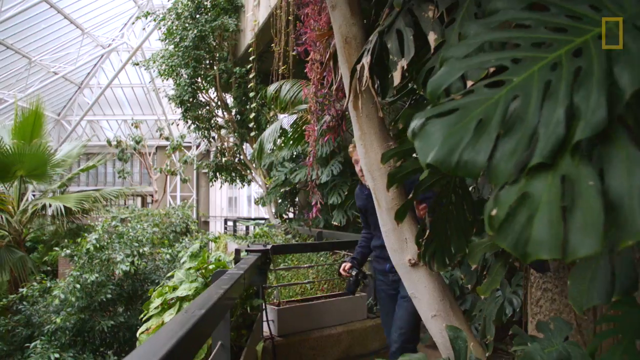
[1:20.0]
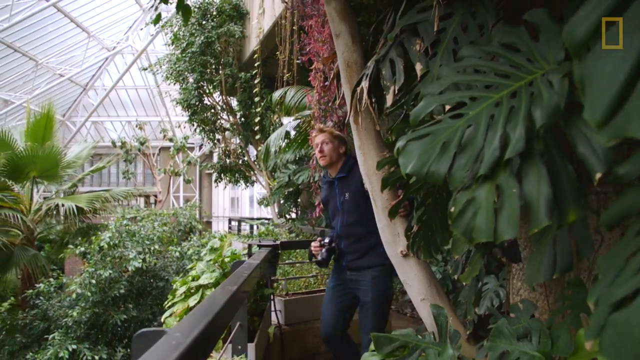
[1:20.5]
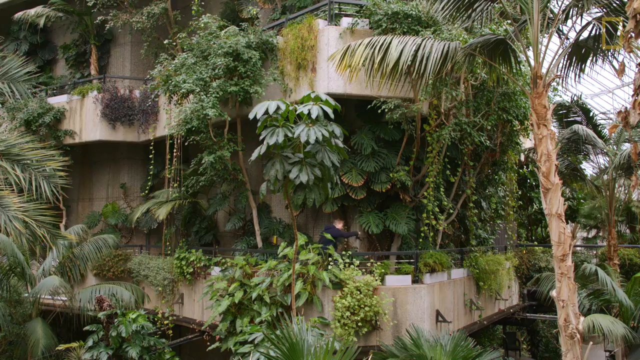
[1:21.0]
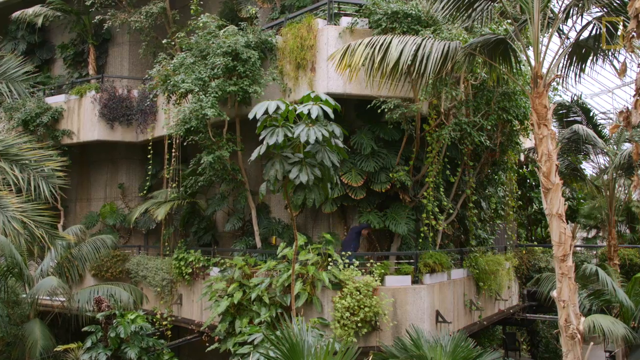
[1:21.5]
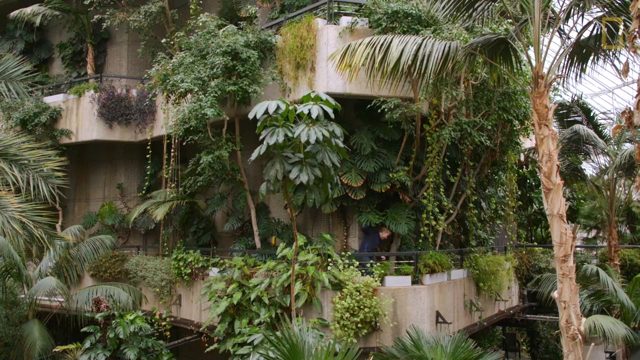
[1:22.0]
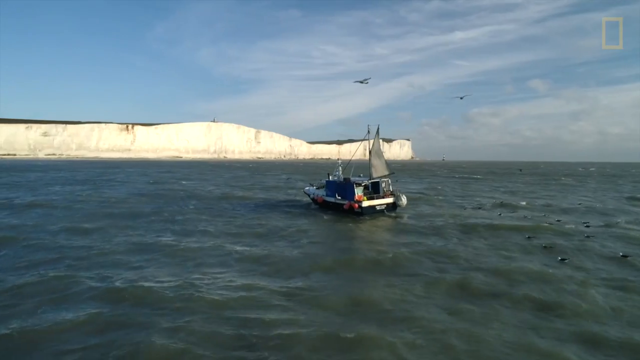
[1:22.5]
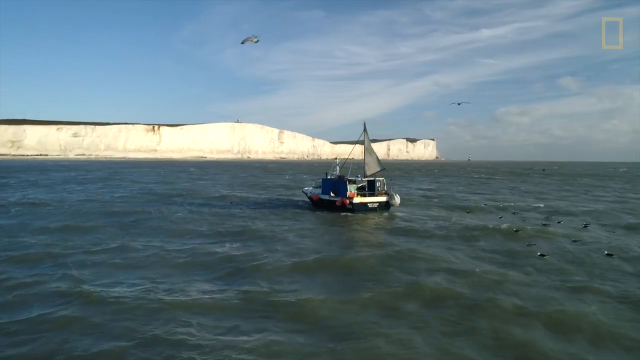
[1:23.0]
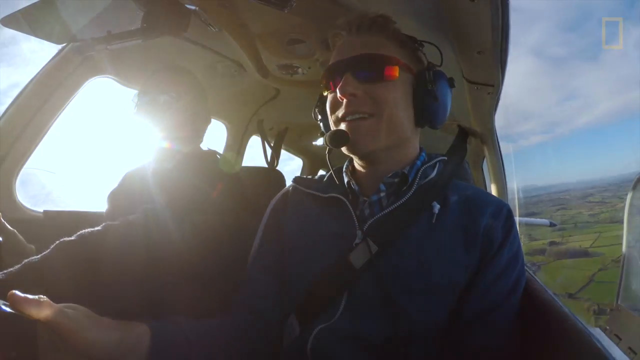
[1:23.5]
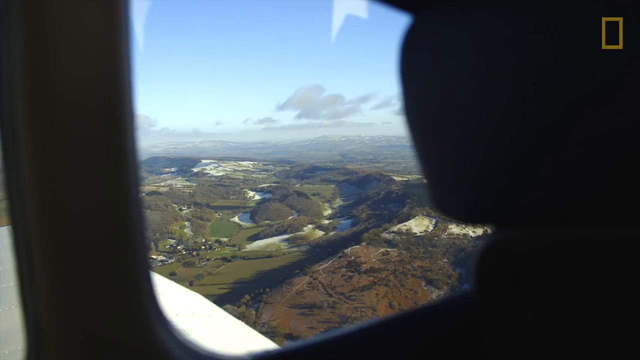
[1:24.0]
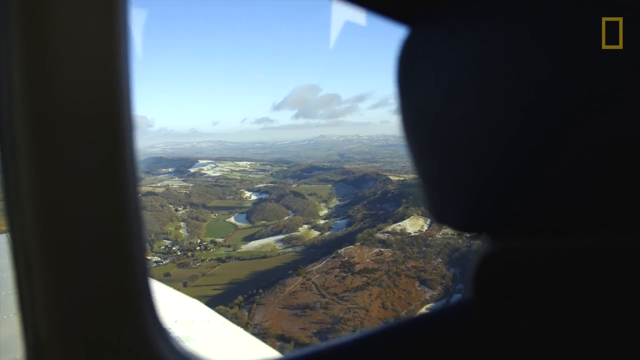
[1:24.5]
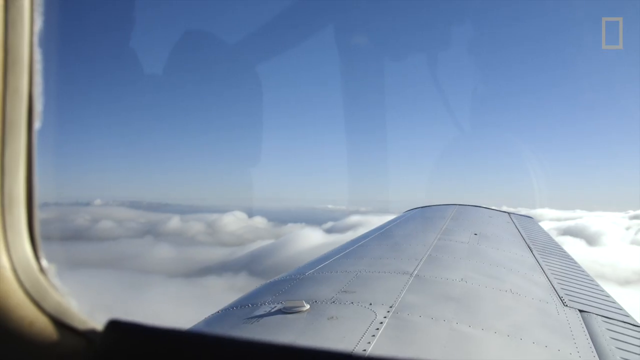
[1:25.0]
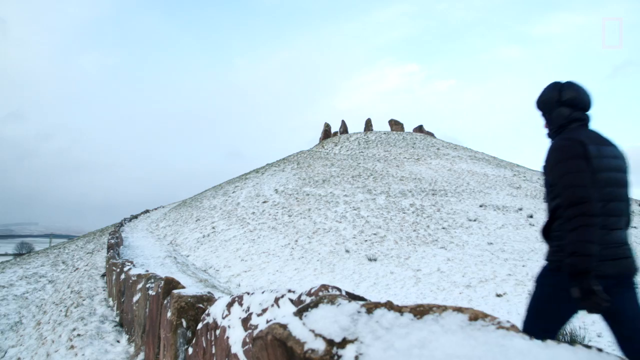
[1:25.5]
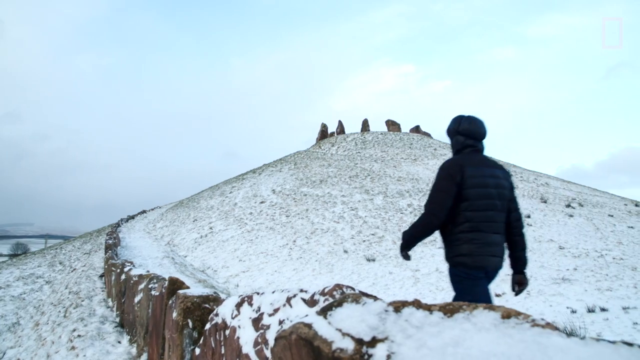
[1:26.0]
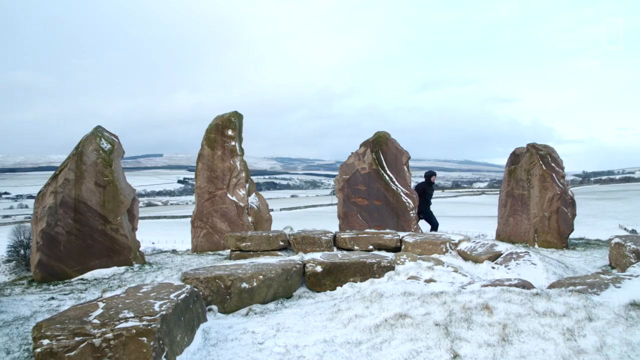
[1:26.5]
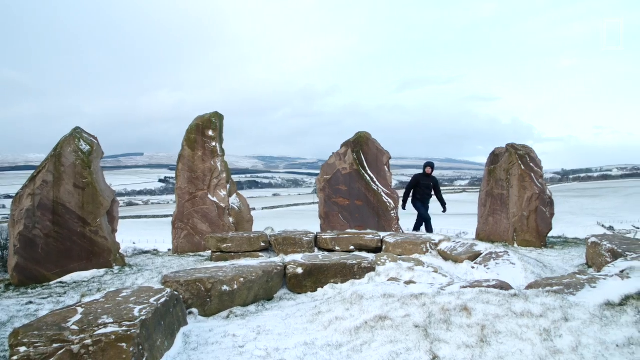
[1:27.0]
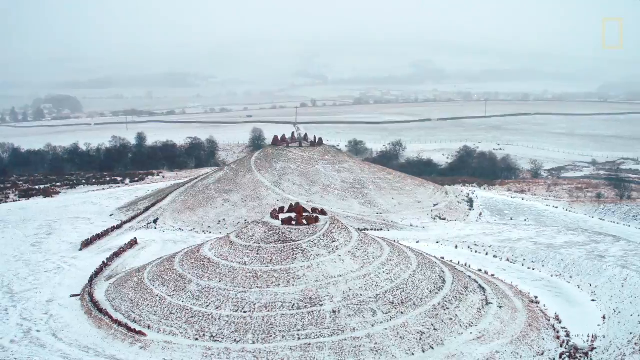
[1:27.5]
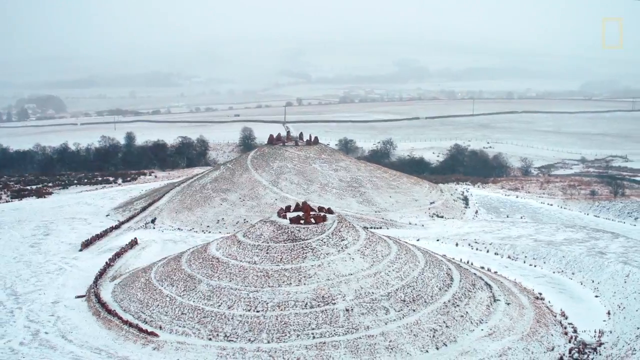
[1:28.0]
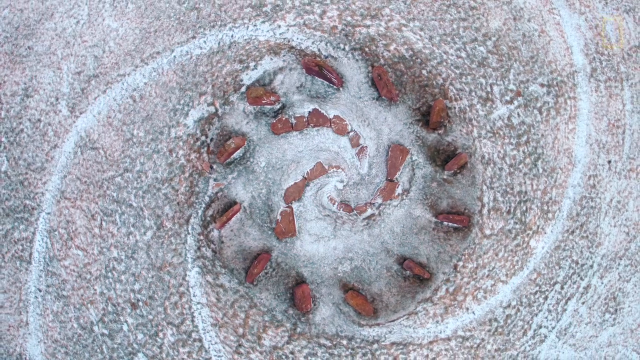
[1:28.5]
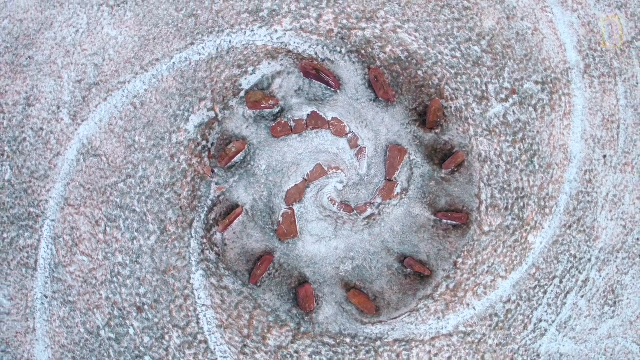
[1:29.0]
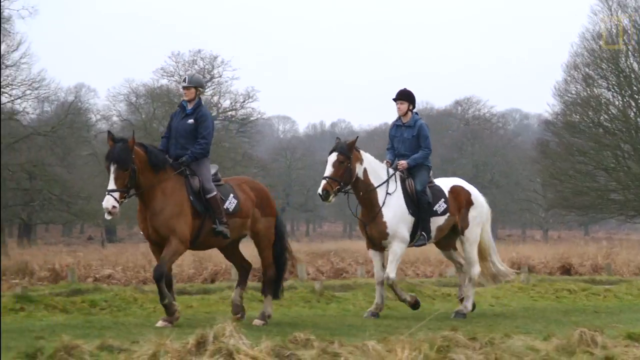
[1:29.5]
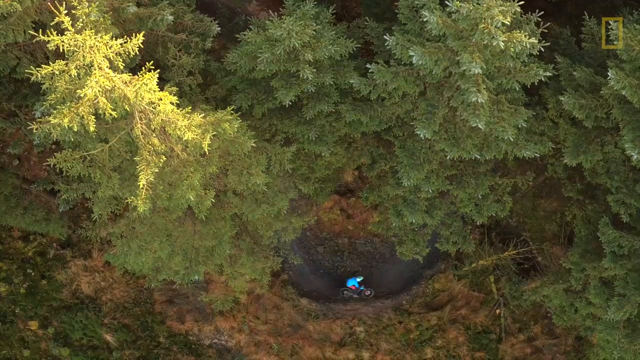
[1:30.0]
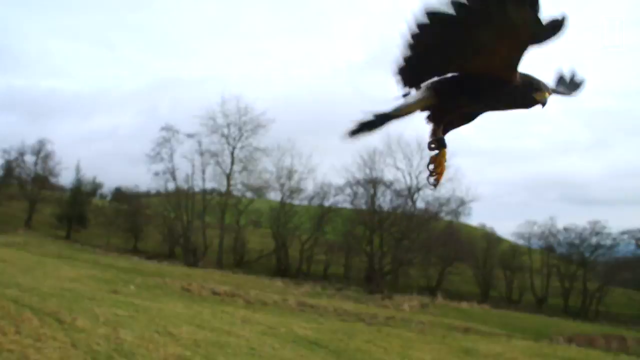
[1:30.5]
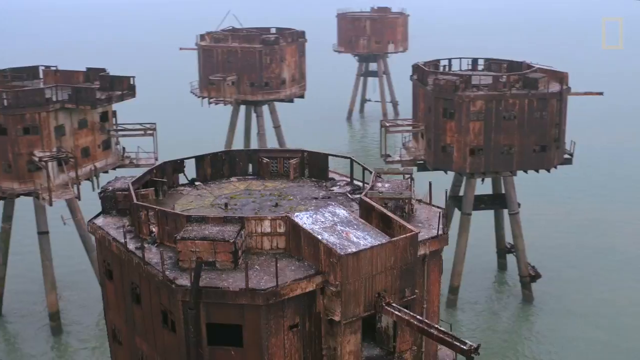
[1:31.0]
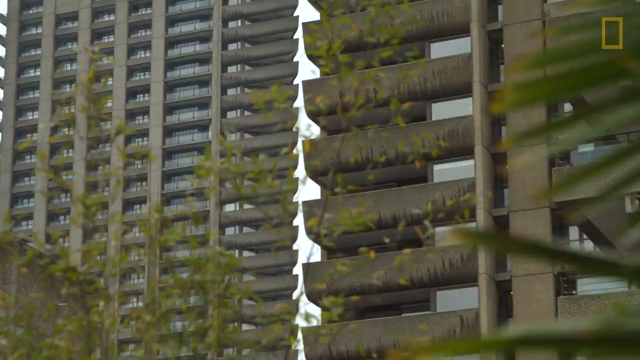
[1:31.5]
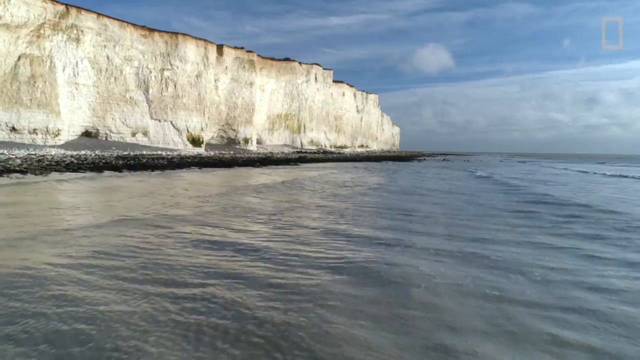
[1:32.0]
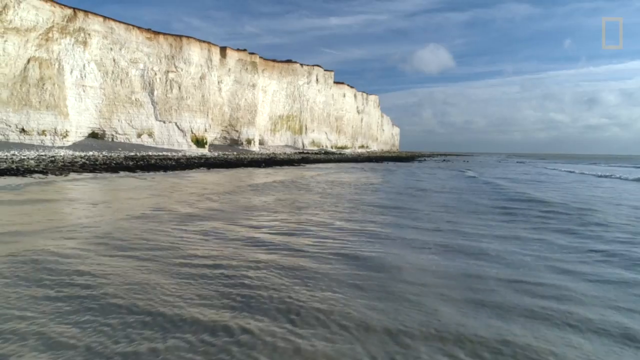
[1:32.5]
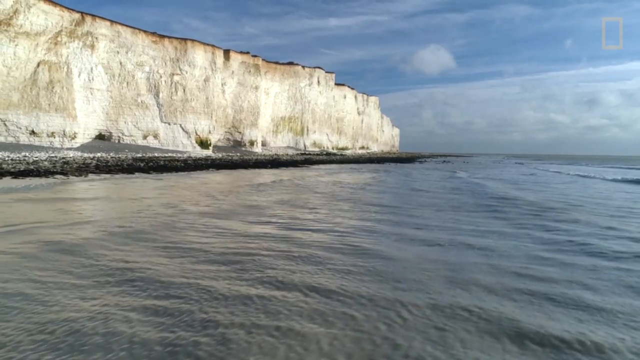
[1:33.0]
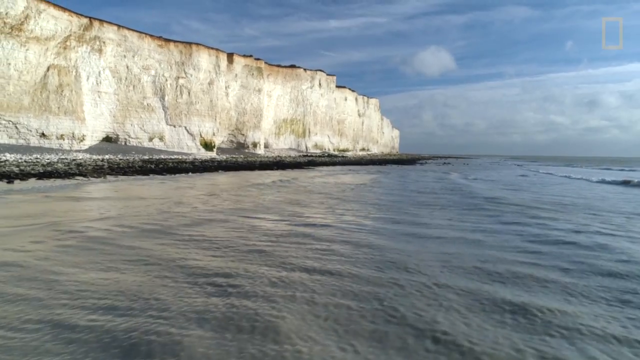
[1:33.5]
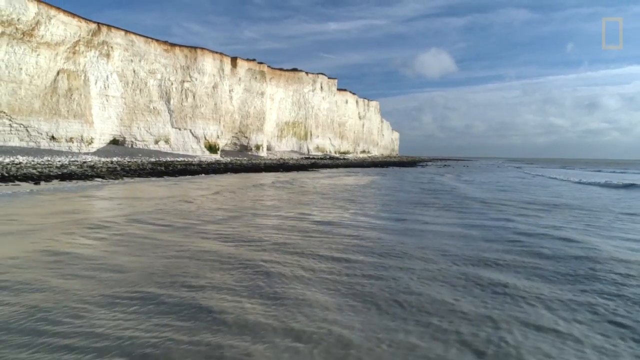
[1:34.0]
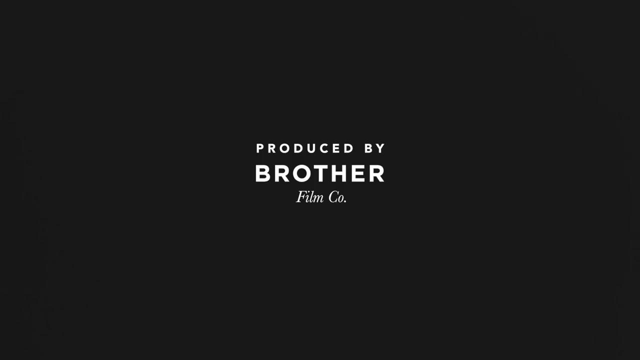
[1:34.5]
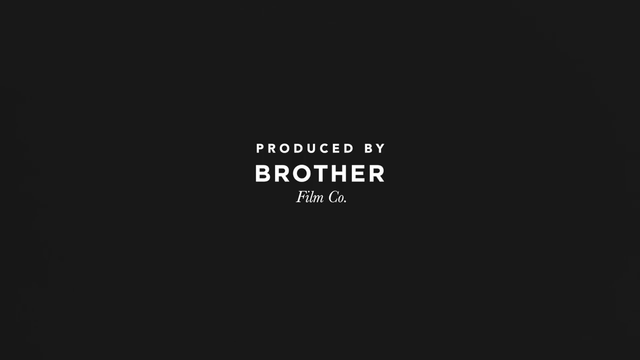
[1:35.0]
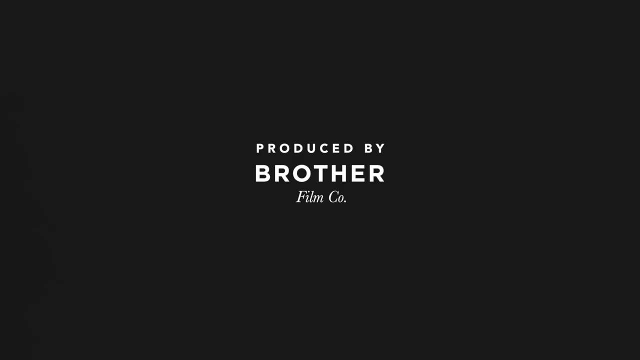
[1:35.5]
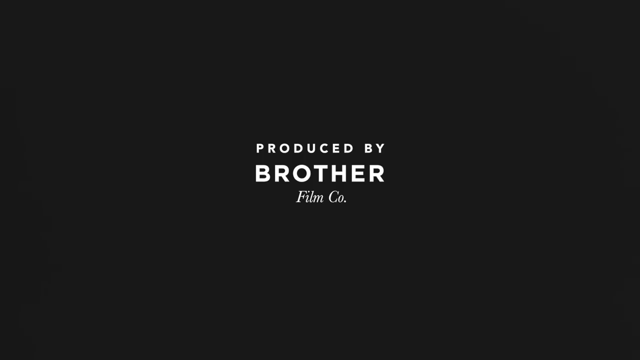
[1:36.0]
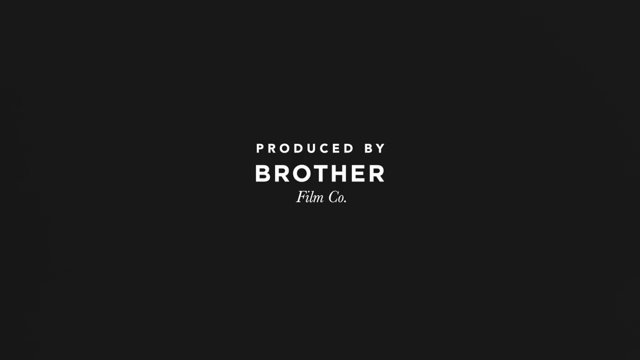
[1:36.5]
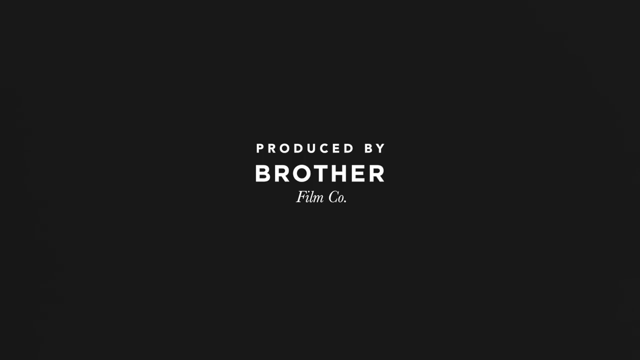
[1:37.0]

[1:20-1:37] The man appears to be inside an indoor garden area, seemingly a tourist attraction, where a huge greenhouse is built over what looks like an old abandoned apartment building whose inside has been taken over by plants. He is then seen hiking through different areas. He travels by plane, and it looks like summertime outside, and then he hikes along a trail on a snowy mountainside in the wintertime. There are monoliths built on top of the mountains, ancient sites he is visiting. He mountain bikes down a forest trail, followed by several quick cuts. At the end, text says the video is "produced by Brother Film Company". The cuts show his travels through different parts of Great Britain and, apparently, Ireland.